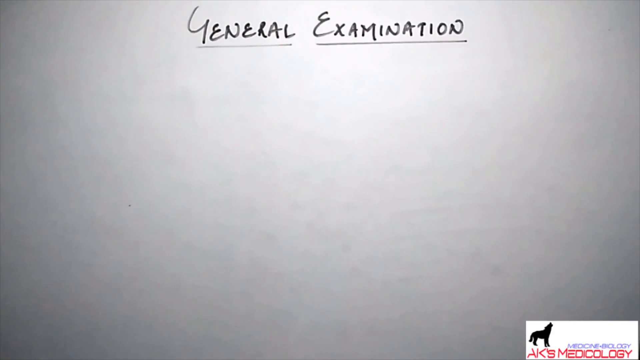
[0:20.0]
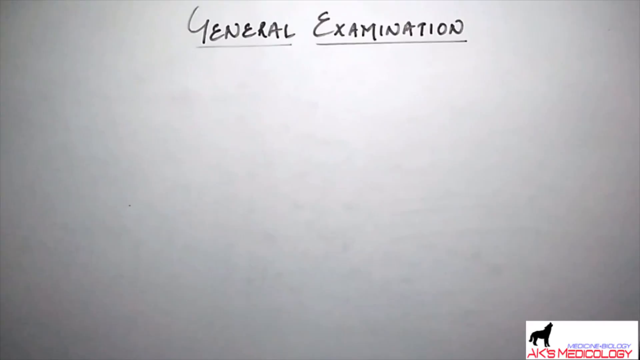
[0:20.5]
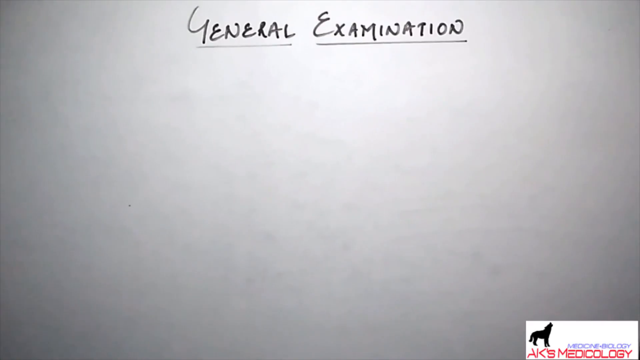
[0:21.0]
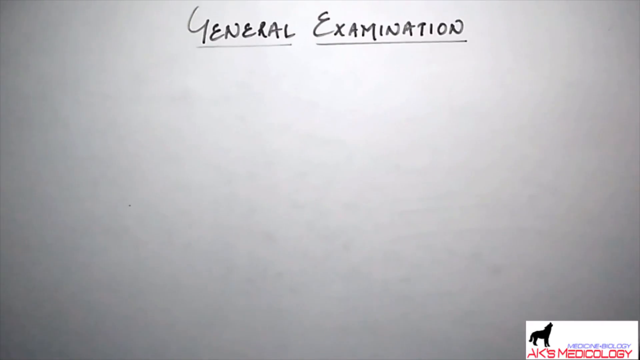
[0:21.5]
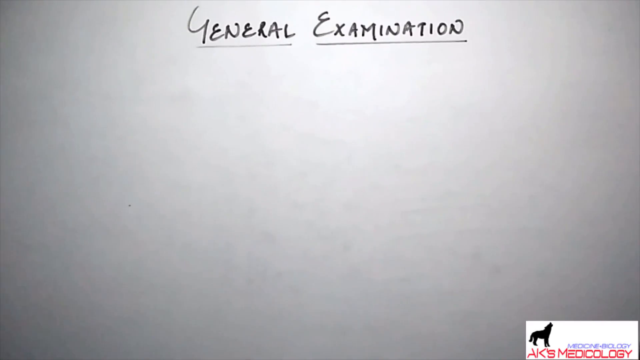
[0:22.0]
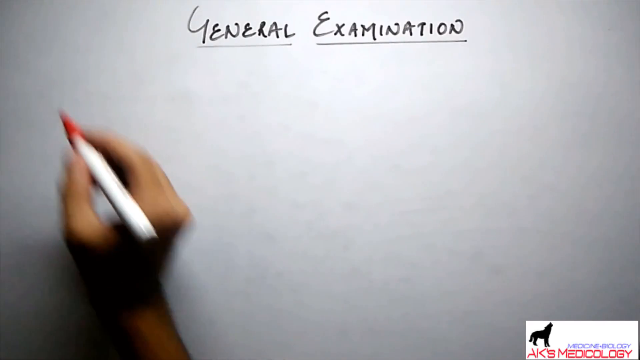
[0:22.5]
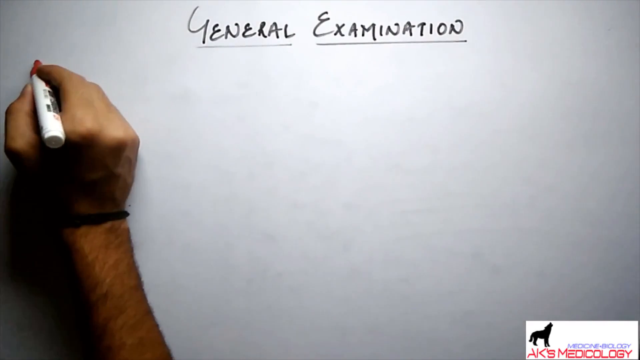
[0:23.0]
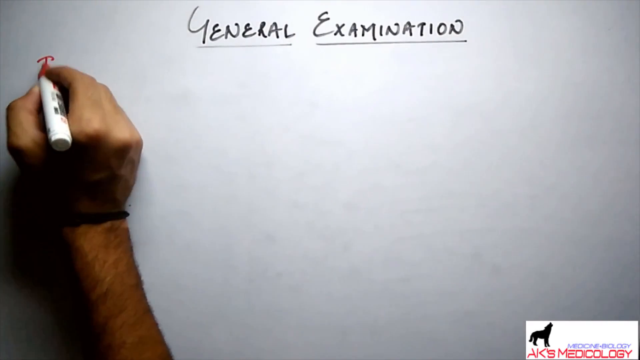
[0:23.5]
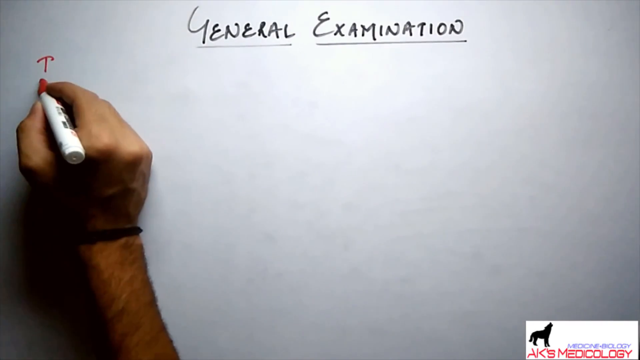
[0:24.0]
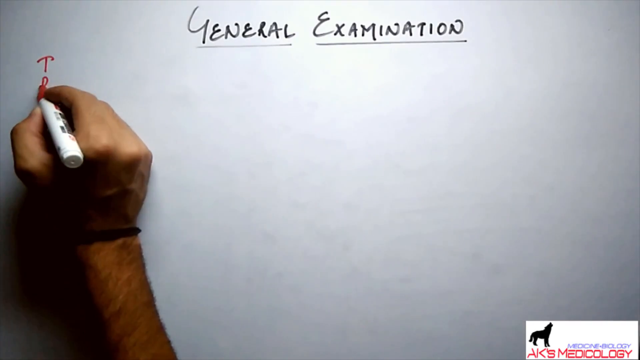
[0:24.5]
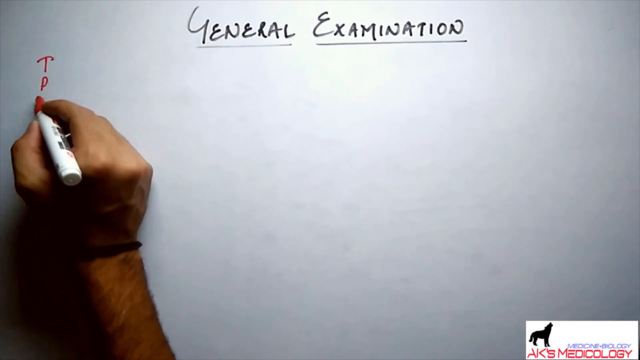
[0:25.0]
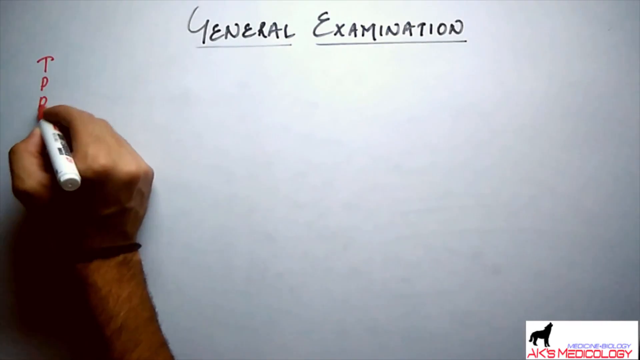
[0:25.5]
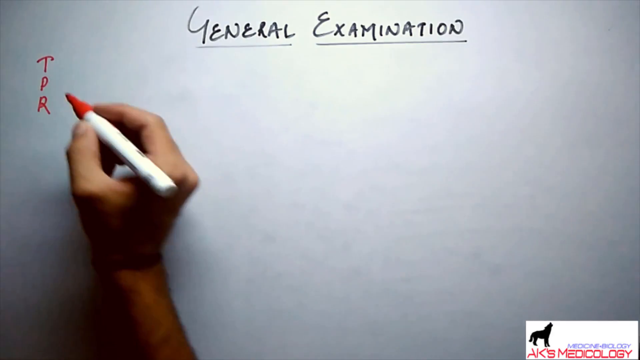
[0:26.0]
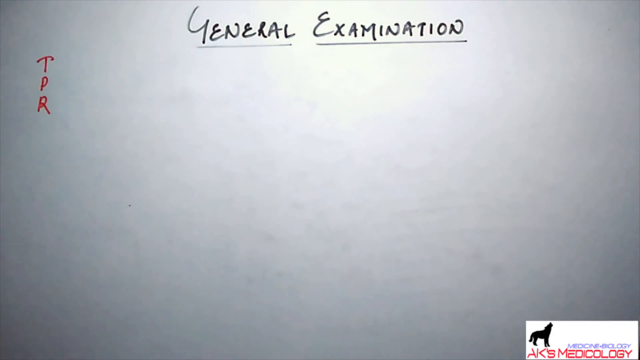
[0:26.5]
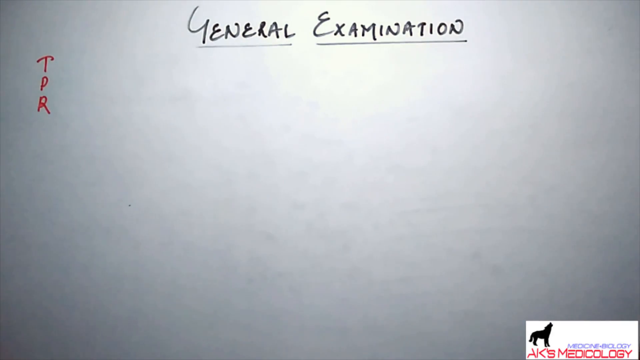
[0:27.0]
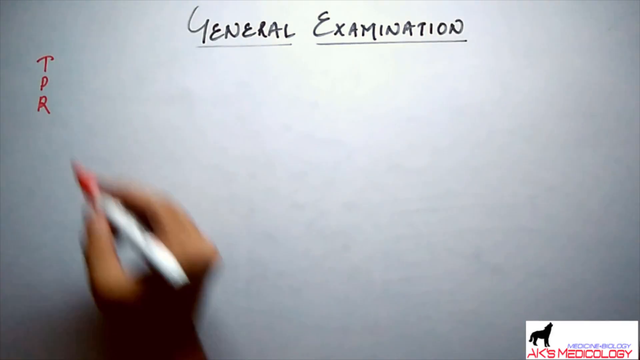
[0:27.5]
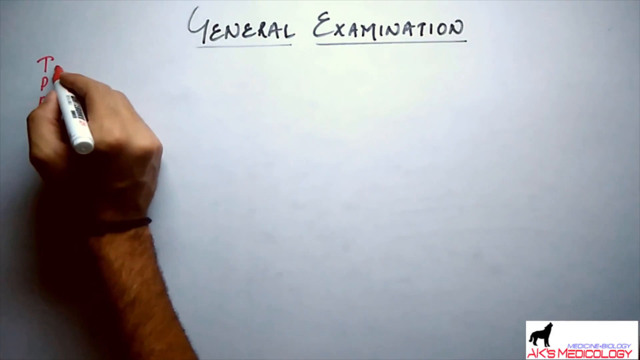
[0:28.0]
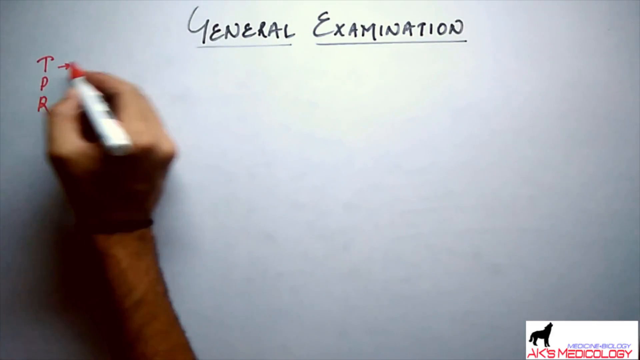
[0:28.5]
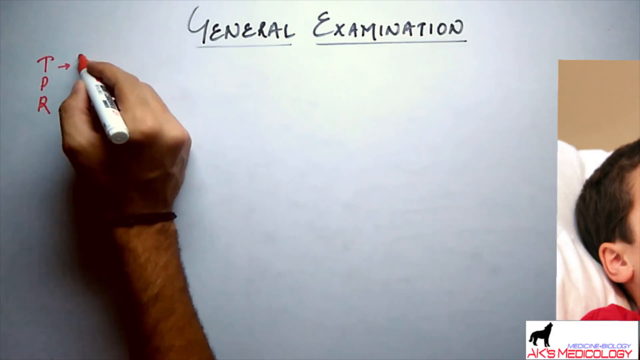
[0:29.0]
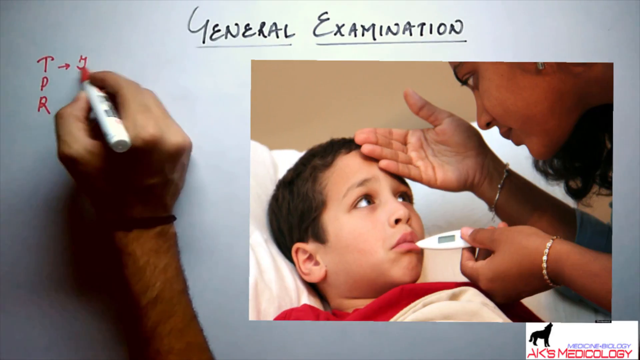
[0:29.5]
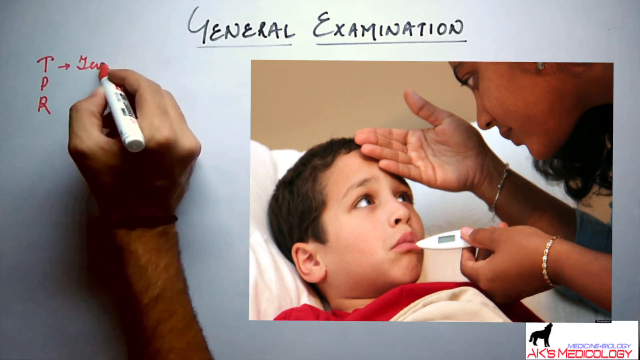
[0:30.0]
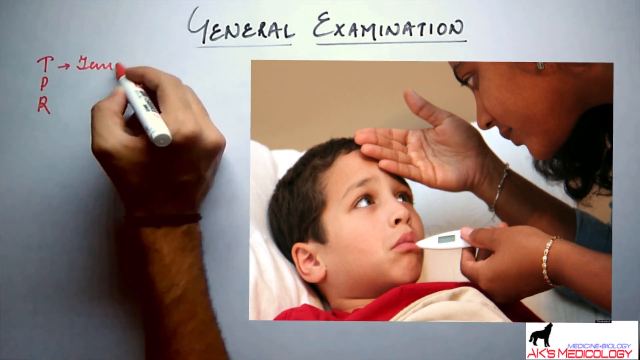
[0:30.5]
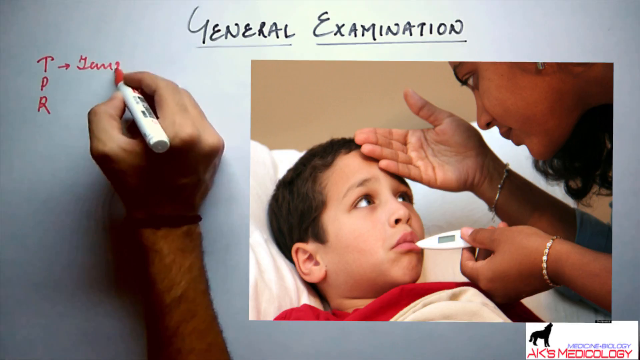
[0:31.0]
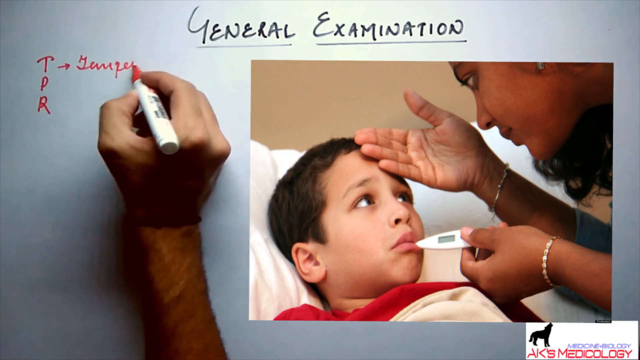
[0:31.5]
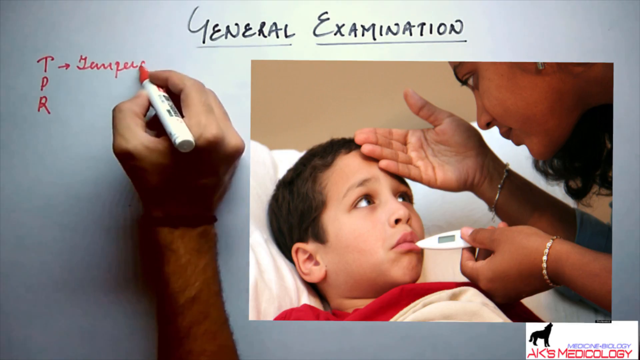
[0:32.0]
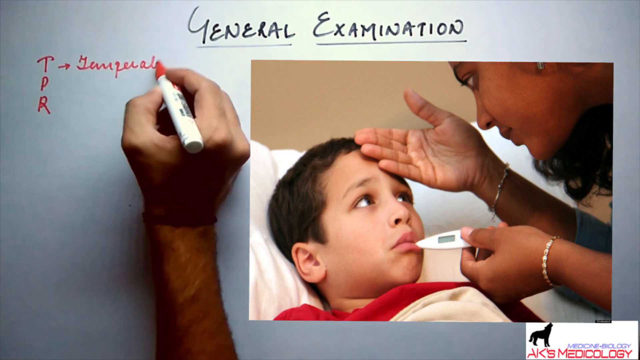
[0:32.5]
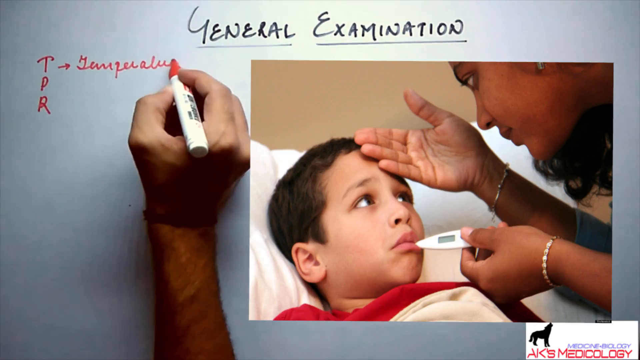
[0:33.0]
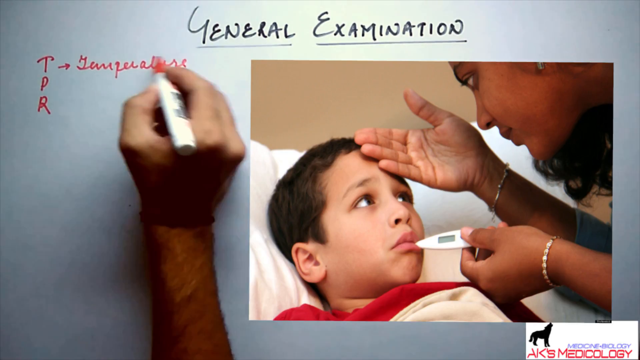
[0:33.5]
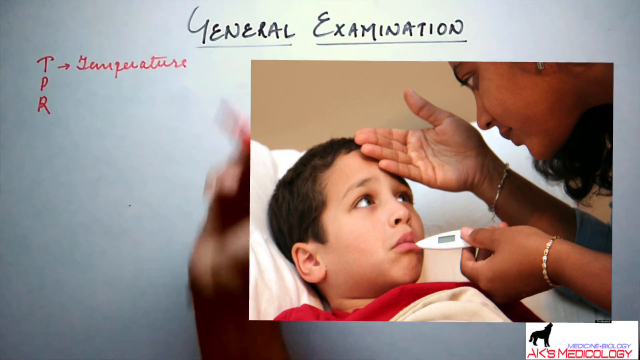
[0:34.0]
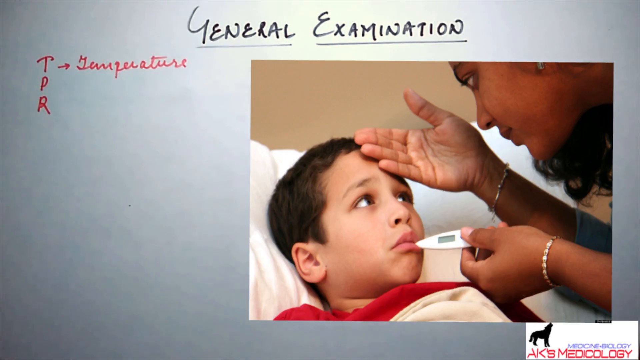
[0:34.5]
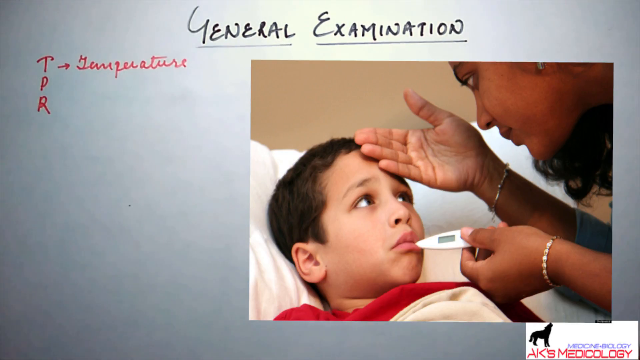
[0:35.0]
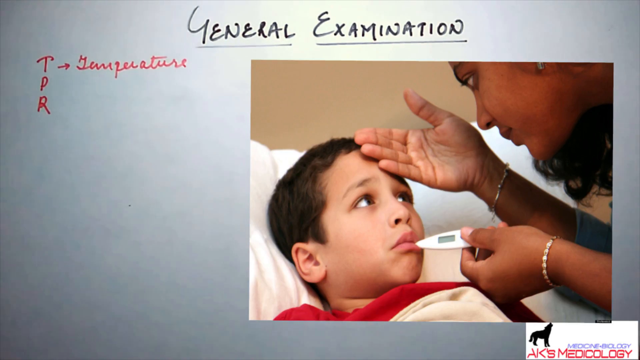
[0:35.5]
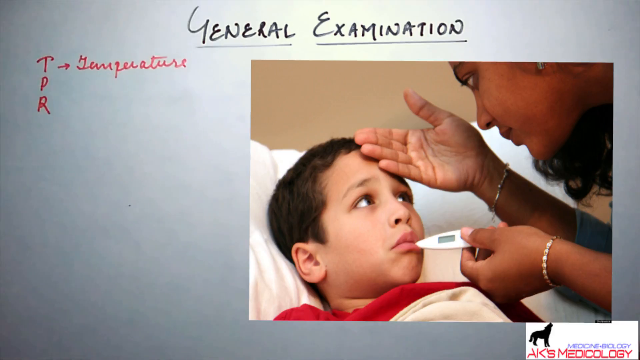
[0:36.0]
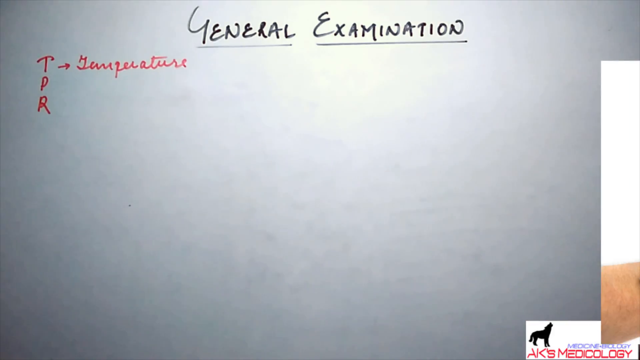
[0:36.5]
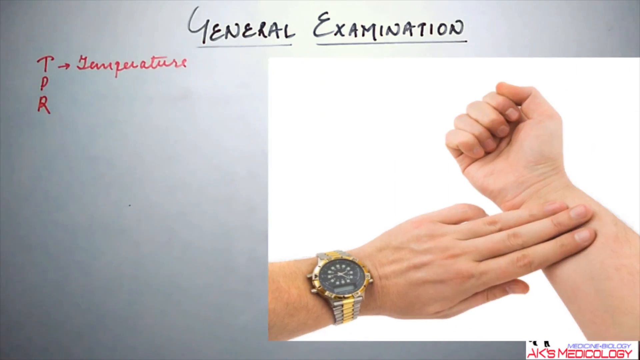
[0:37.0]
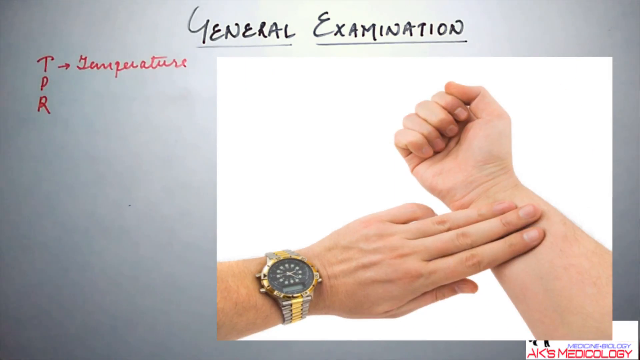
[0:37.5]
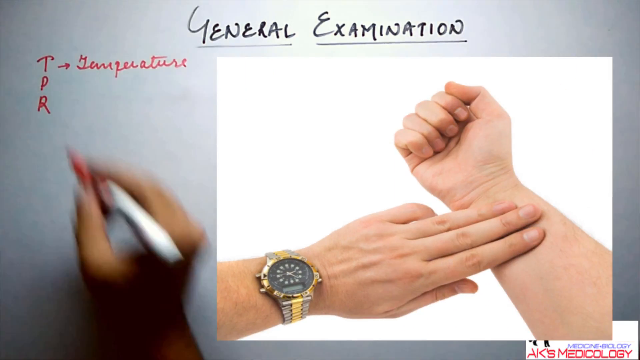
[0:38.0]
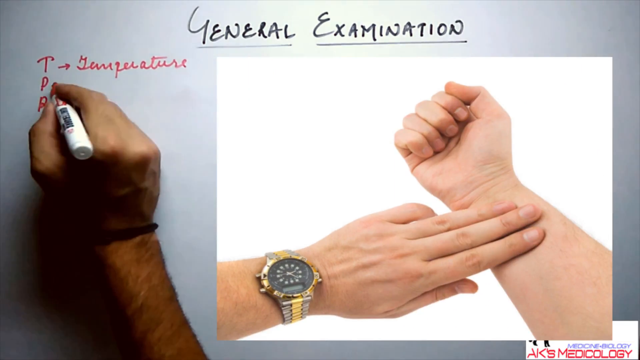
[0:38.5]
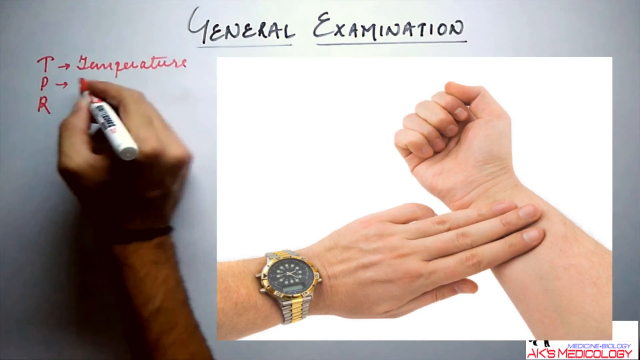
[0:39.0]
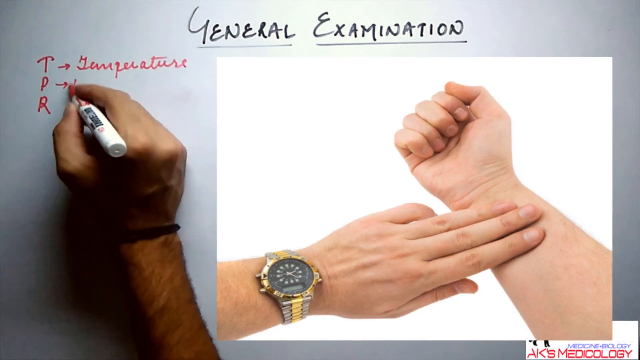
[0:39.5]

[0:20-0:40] A white-grayish board shows the words "General Examination" written in capital letters, with each word underlined. In the lower right corner of the screen there is a box with text. A hand writes the letters T, P, R on the board. As the person writes, a picture appears of a nurse and a child lying in a bed; the nurse takes the child's temperature and feels his forehead. The word "temperature" is written by the letter T. Next, a picture of two hands appears, one wearing a gold watch, showing someone placing their fingers on their other arm to check their pulse.